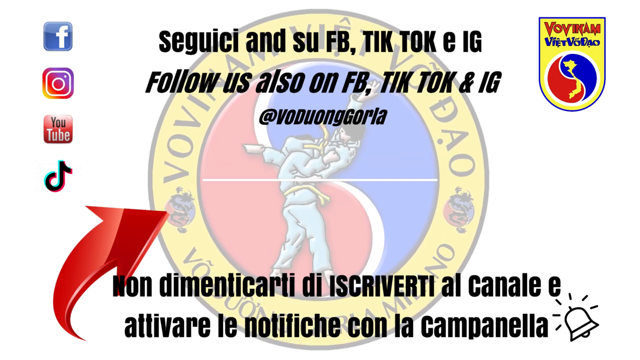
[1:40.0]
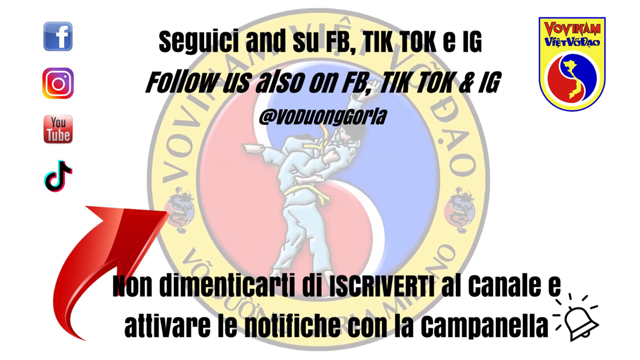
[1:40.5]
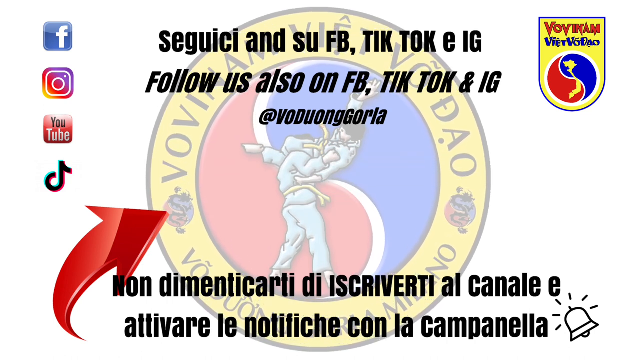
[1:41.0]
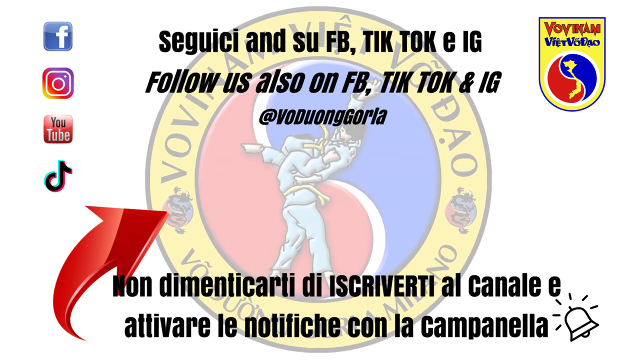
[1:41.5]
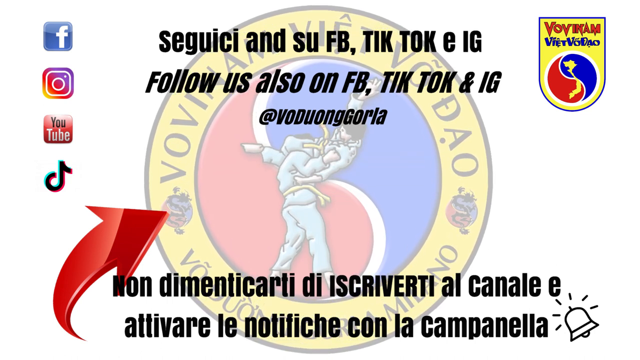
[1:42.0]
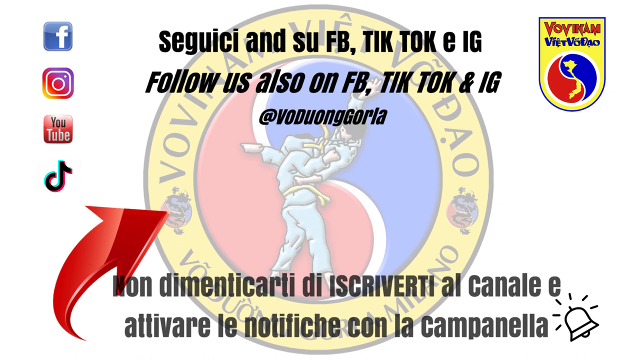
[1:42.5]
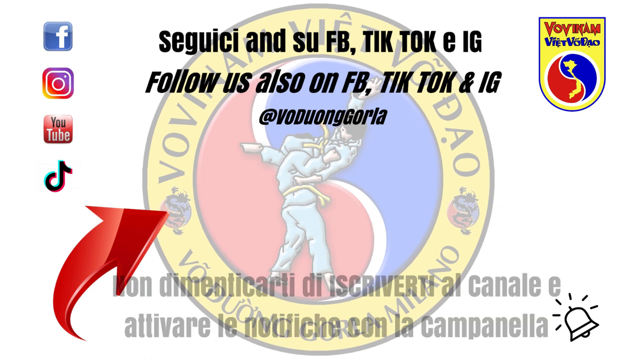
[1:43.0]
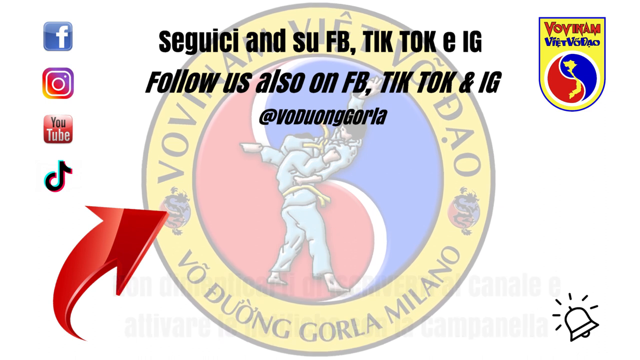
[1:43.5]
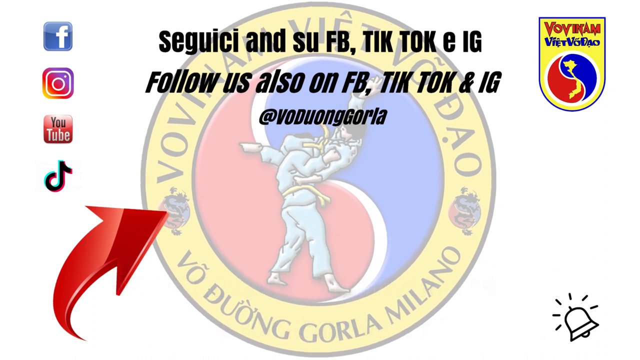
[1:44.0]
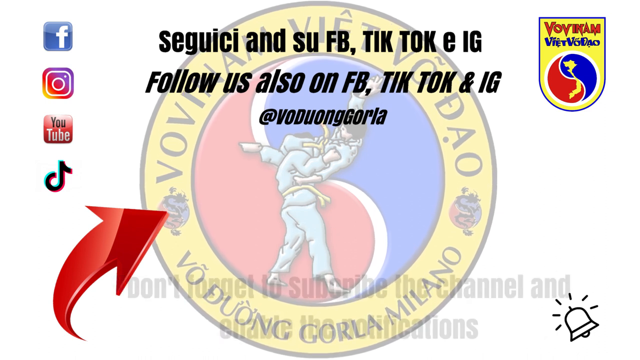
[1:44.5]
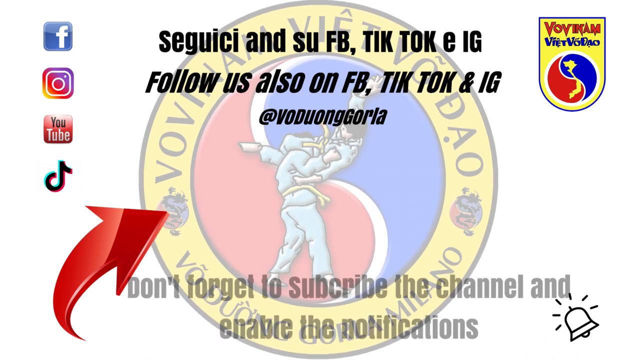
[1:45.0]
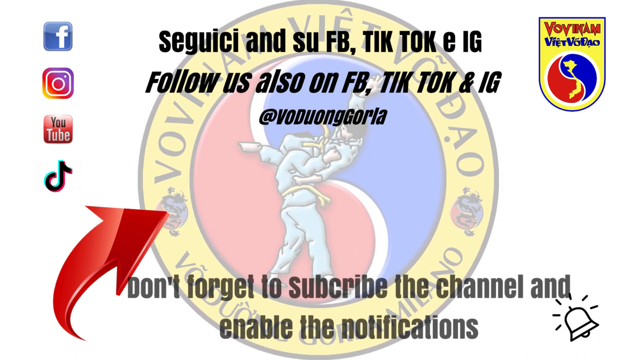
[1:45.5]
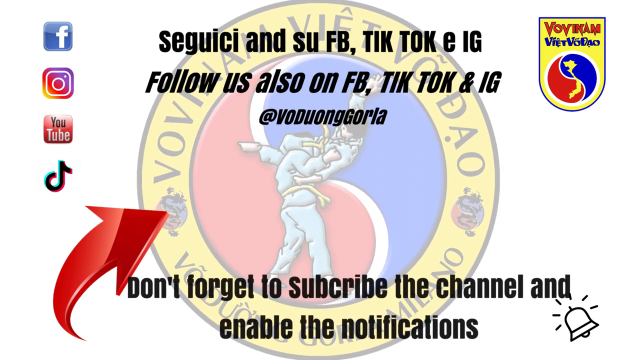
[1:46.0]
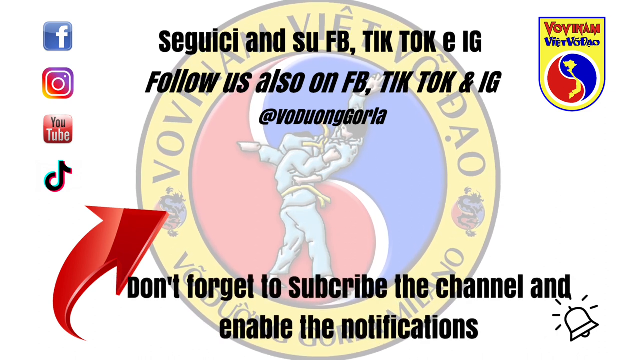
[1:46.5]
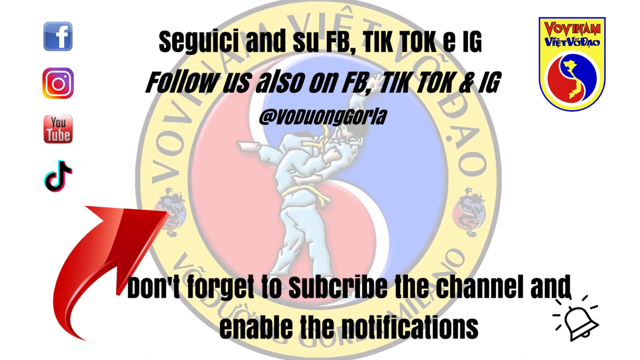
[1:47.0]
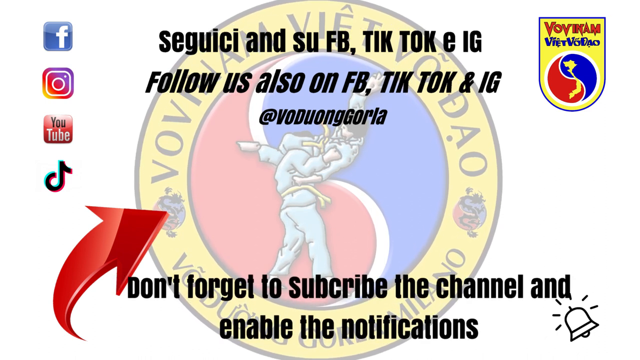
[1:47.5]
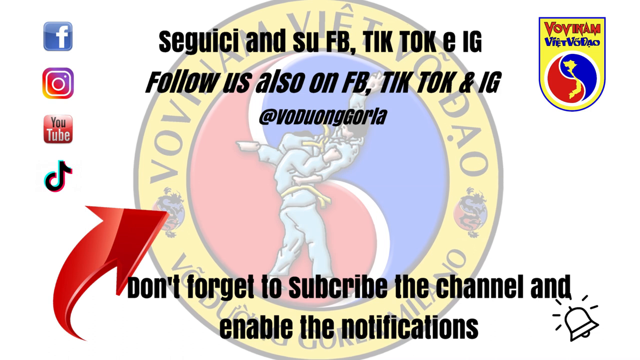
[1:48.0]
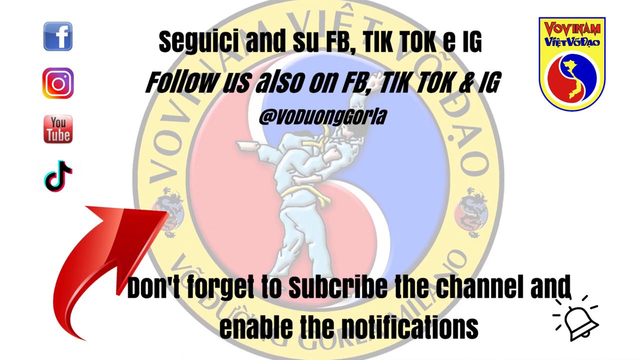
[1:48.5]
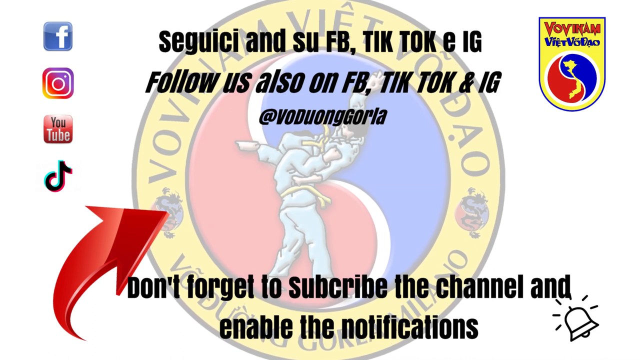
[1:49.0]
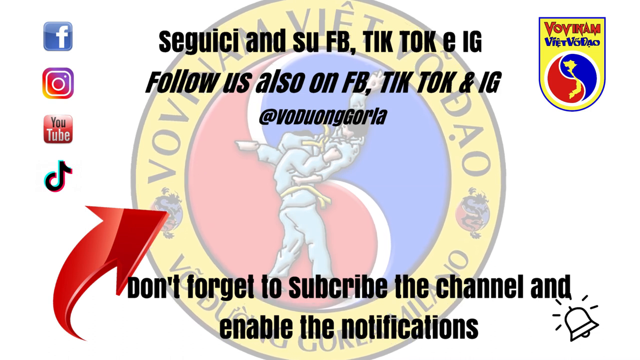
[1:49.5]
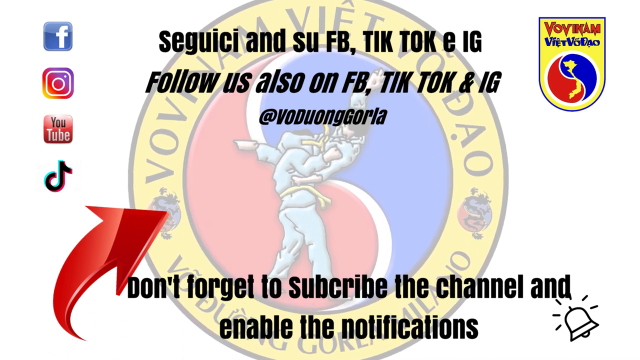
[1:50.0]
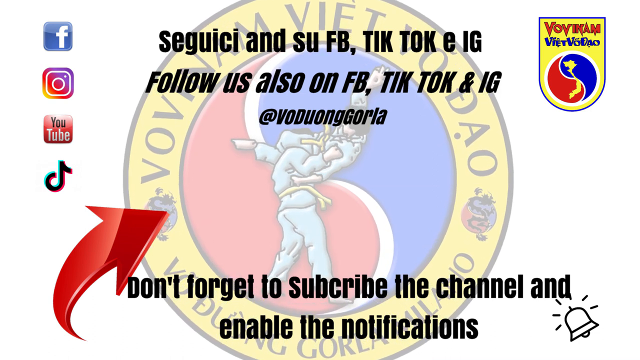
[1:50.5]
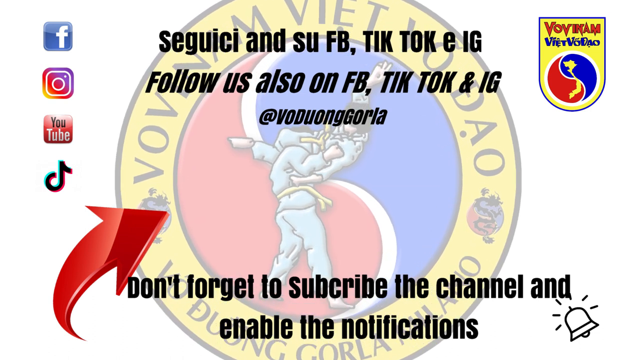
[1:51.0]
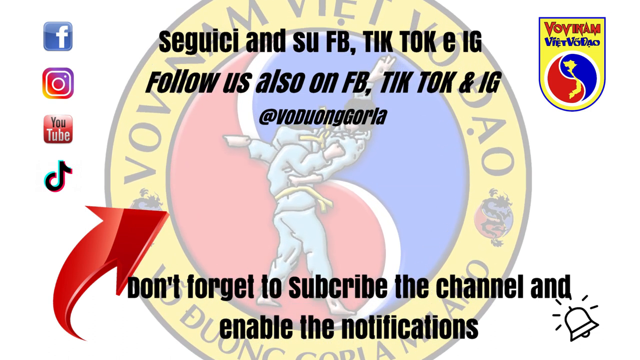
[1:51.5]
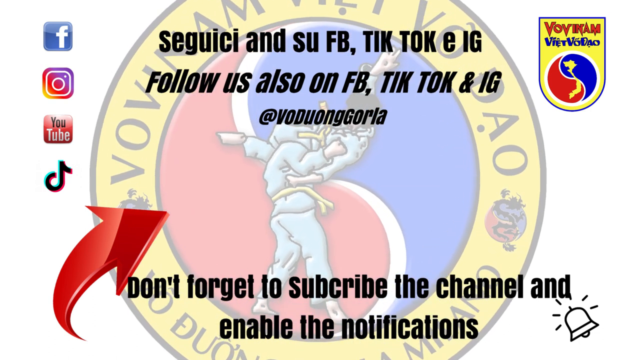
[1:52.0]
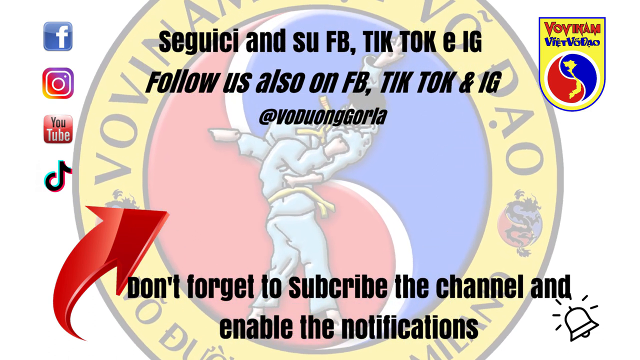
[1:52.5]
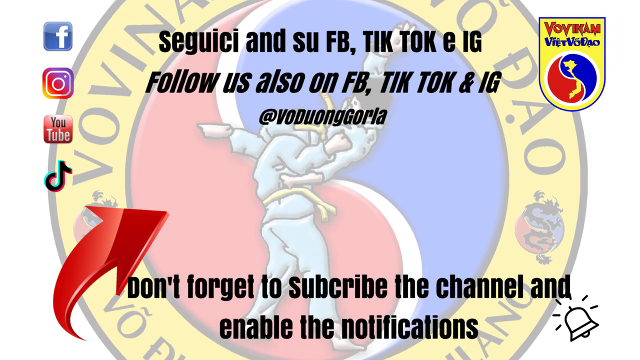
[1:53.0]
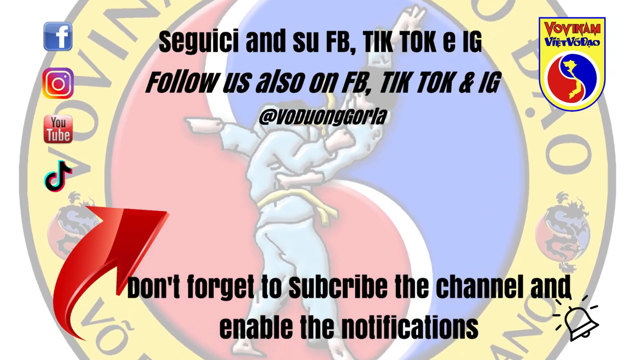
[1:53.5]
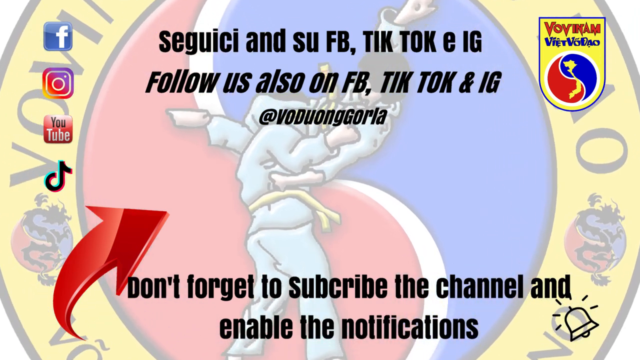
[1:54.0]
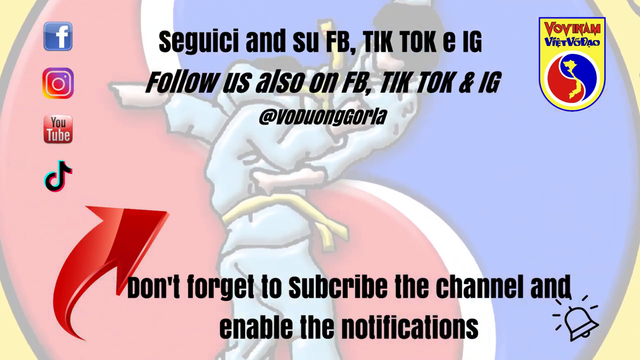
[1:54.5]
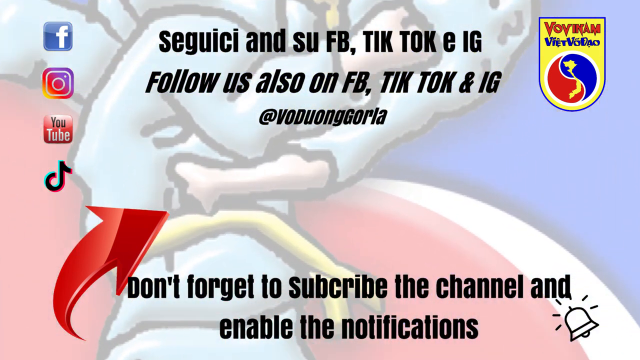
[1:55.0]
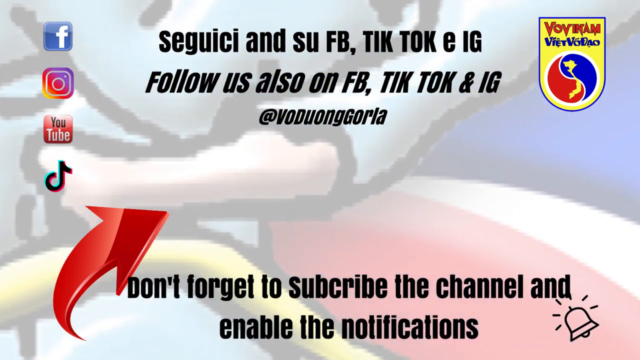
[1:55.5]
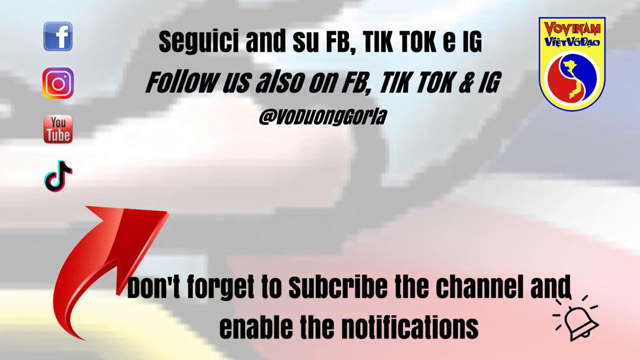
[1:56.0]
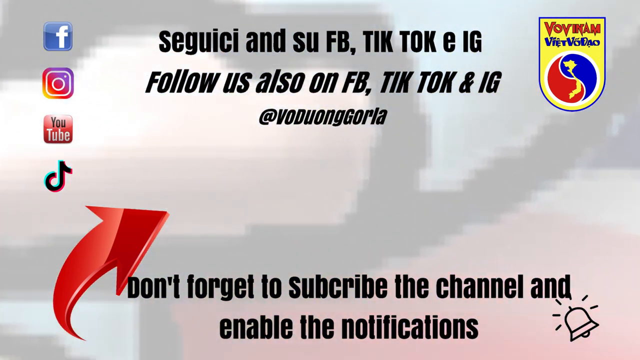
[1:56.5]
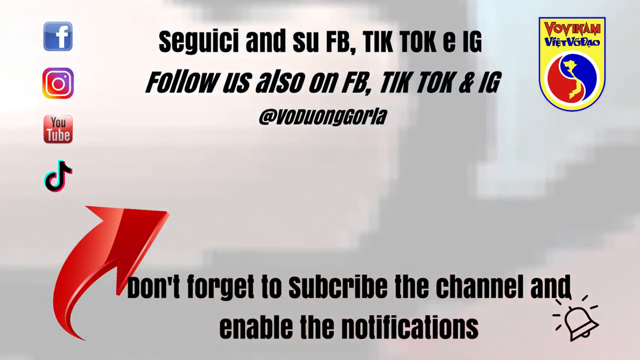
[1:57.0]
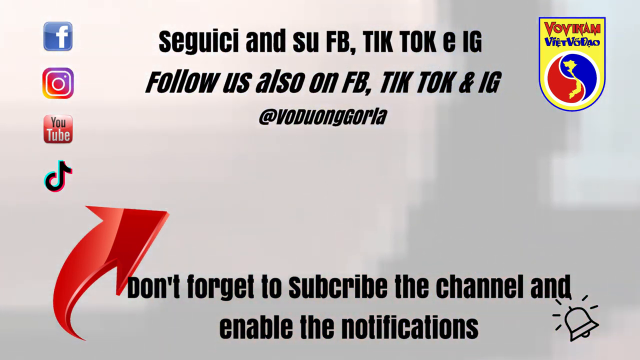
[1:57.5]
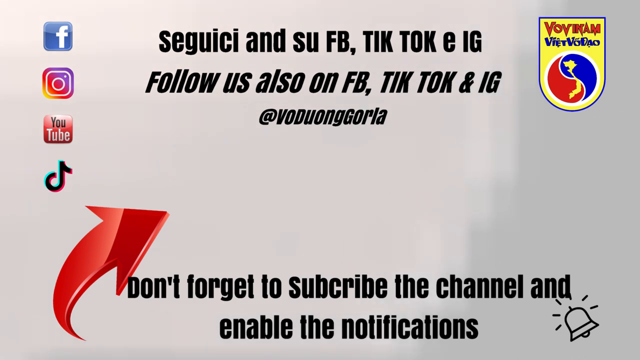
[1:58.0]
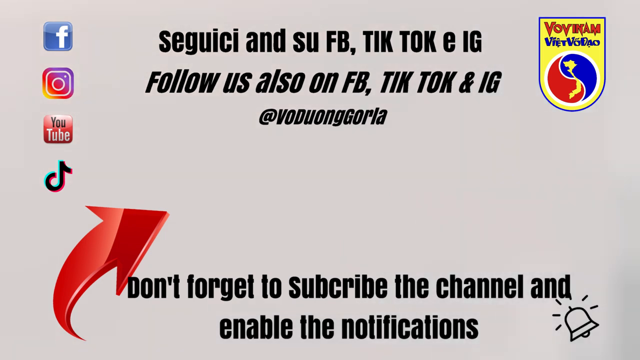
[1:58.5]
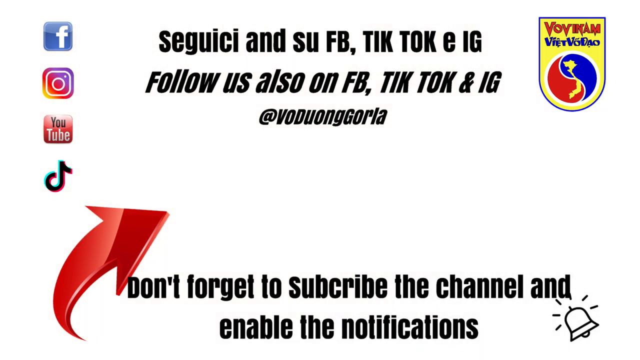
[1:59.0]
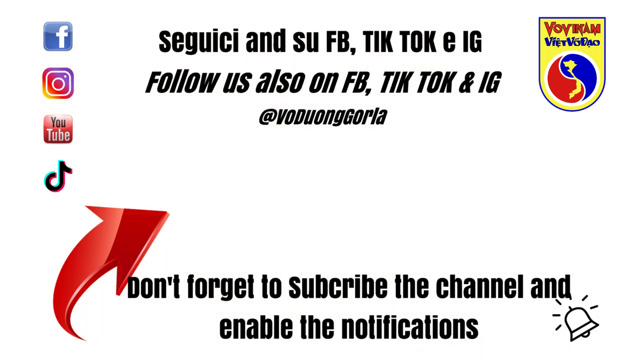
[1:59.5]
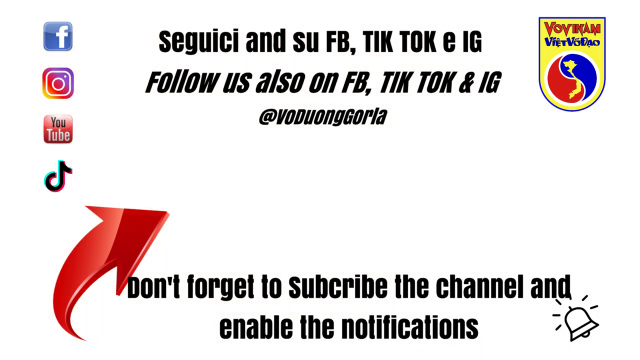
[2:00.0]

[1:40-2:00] A computer screen shows a row of computer icons on the left side: a Facebook logo, a camera icon, a YouTube logo, and a music logo. In the center is a large, faded circular logo featuring two men in some type of sports fight. Black writing at the bottom of the page lies over the logo, which keeps increasing in size even as it becomes lighter. At the bottom of the screen a sentence in black print reads "Don't forget to Subscribe the channel and enable the notifications." On the lower left is a large red arrow pointing upward toward the right corner of the screen. The background fades to grey and then to white, and the logo appears in the center of the screen again and grows large again. It fades to a gray background and then to a white background, and the round logo then appears again in the center of the screen.